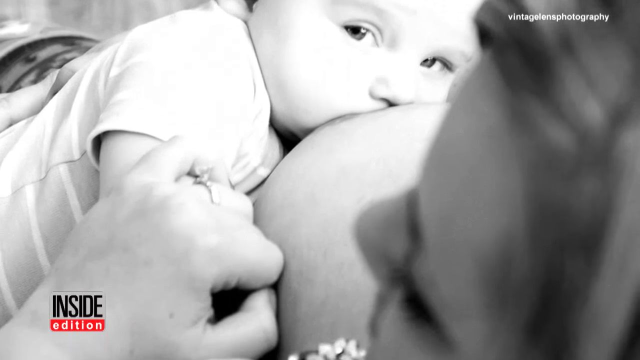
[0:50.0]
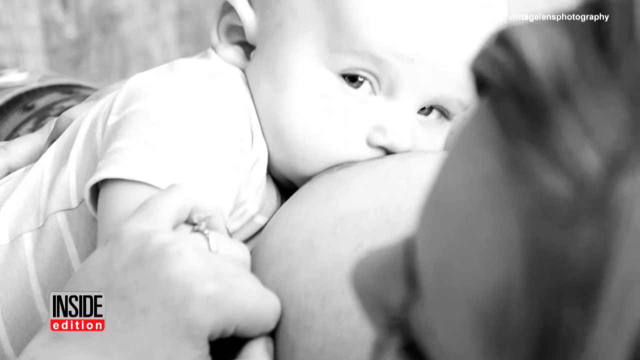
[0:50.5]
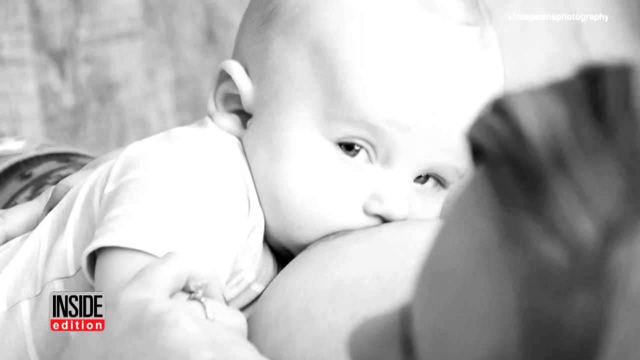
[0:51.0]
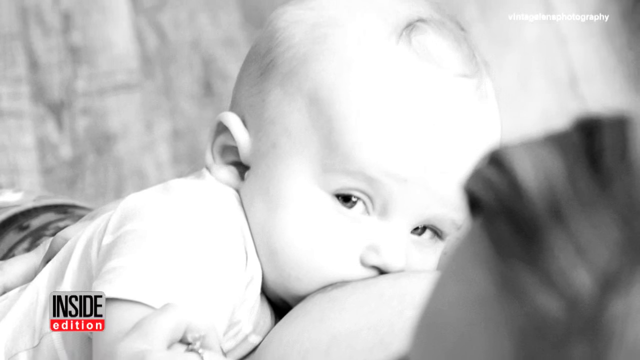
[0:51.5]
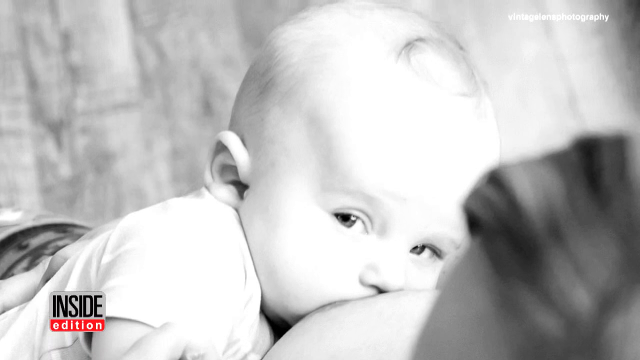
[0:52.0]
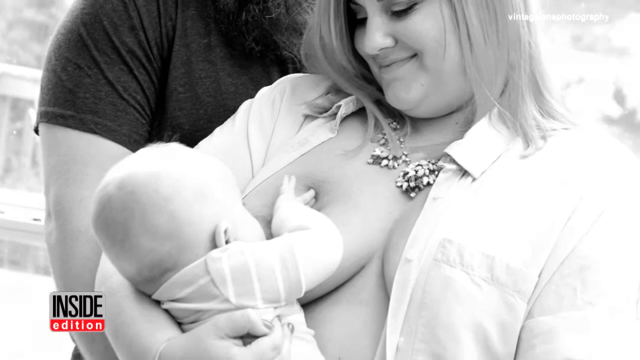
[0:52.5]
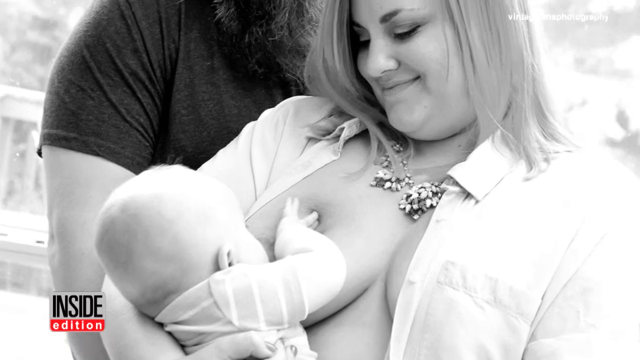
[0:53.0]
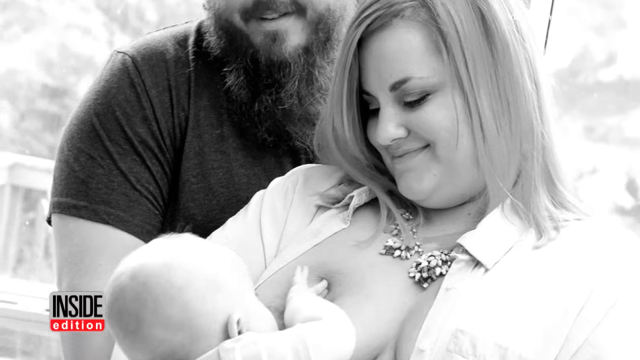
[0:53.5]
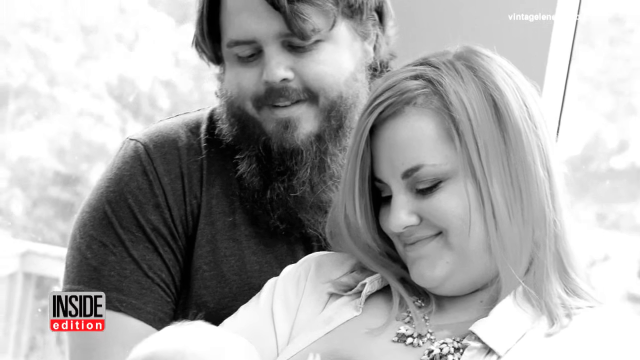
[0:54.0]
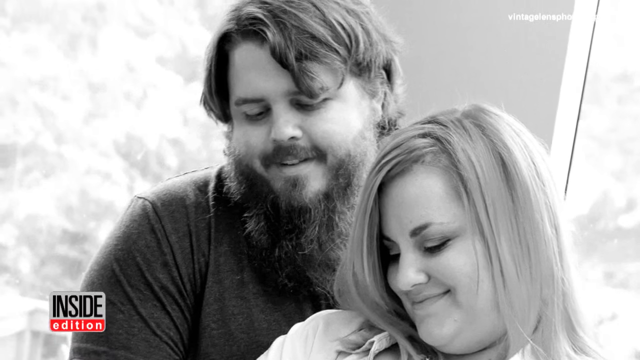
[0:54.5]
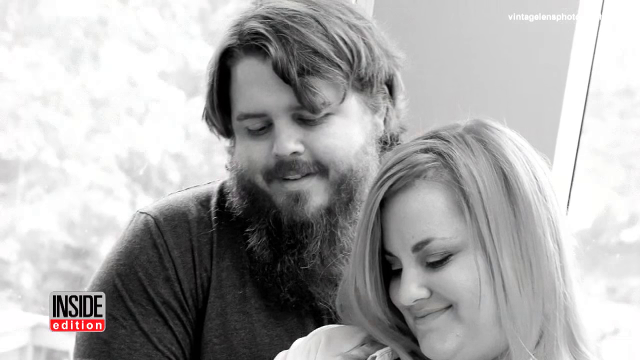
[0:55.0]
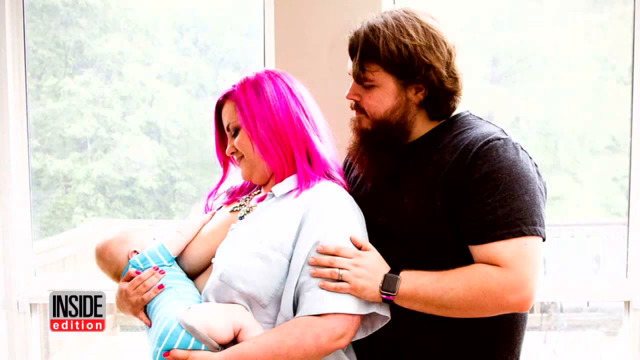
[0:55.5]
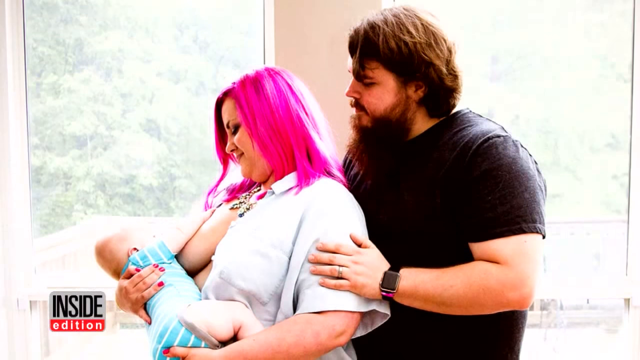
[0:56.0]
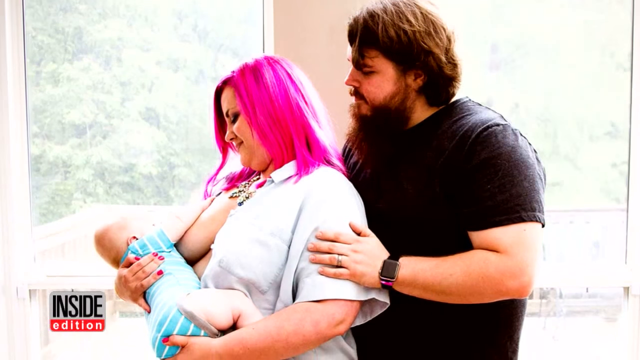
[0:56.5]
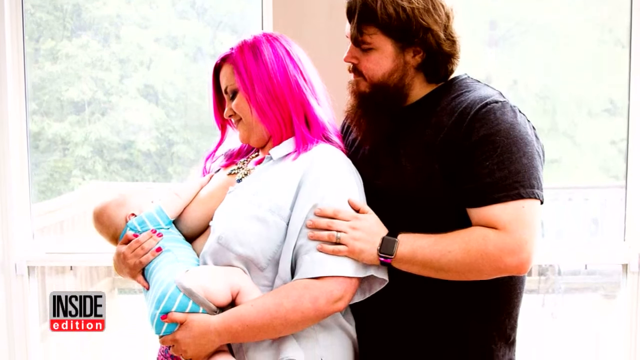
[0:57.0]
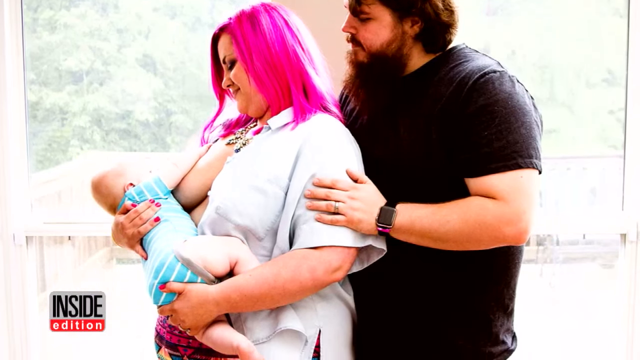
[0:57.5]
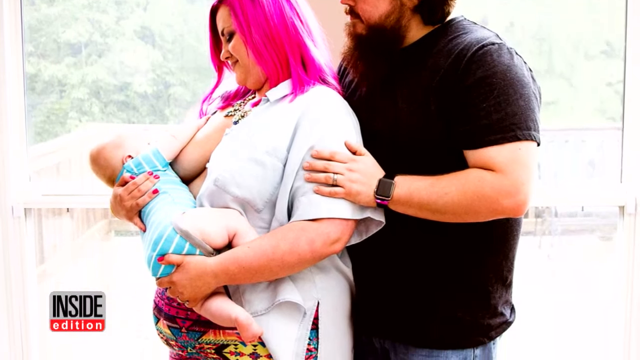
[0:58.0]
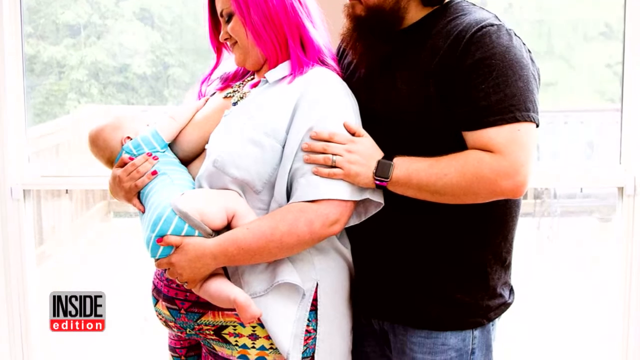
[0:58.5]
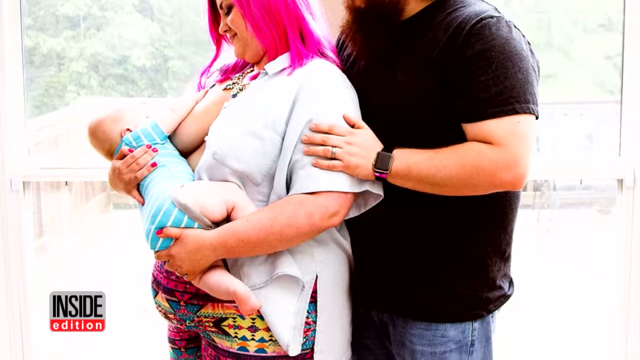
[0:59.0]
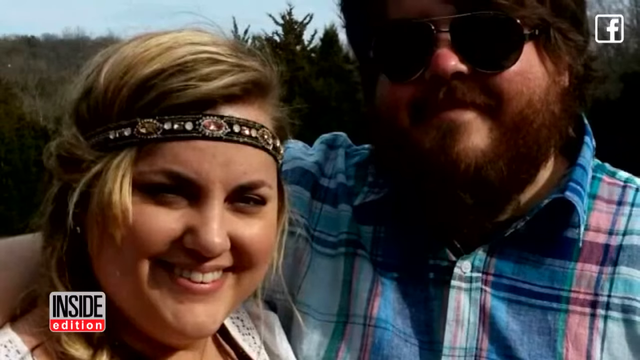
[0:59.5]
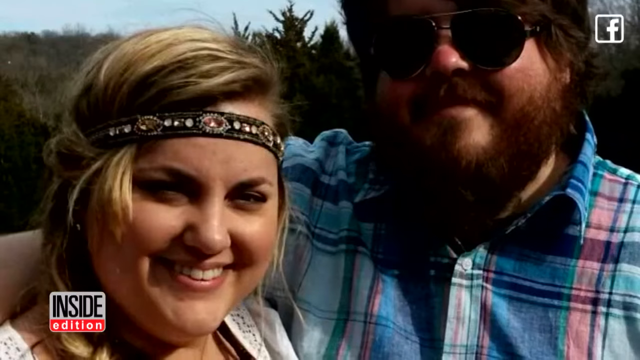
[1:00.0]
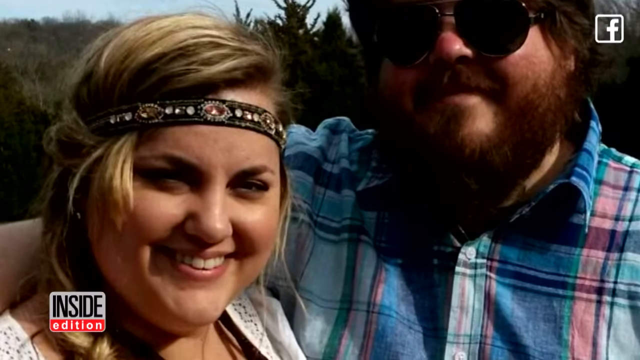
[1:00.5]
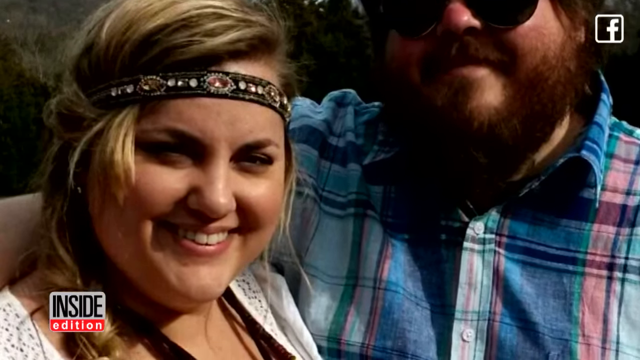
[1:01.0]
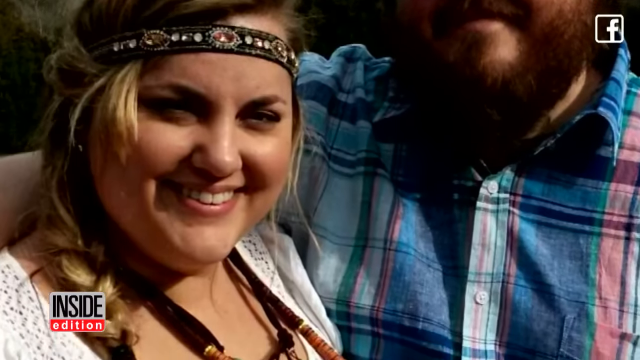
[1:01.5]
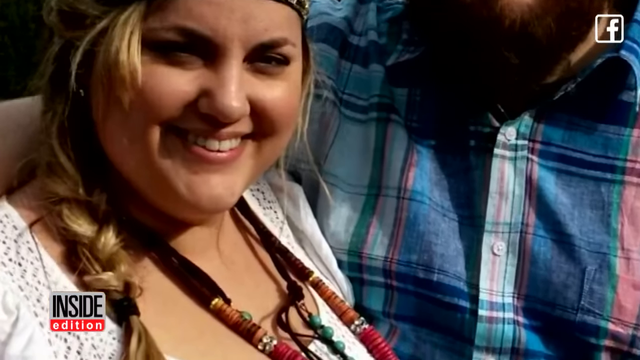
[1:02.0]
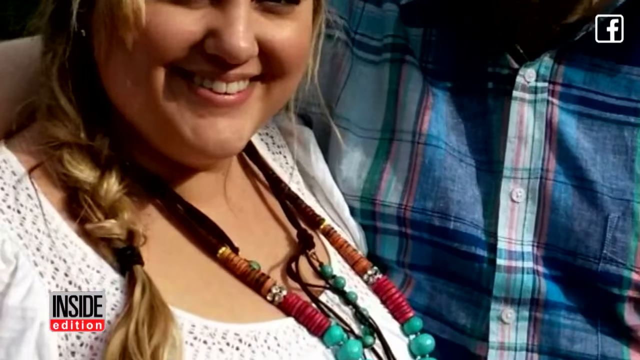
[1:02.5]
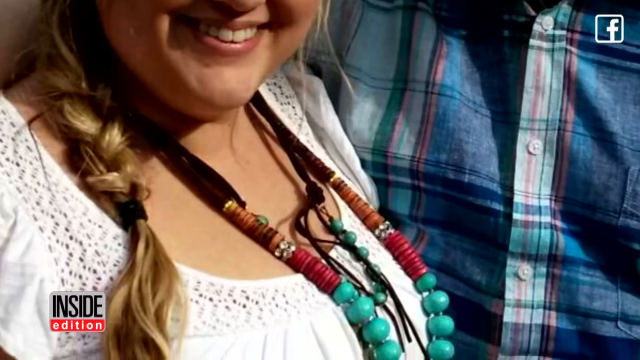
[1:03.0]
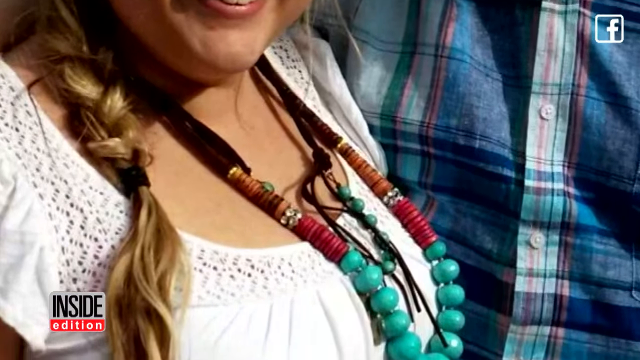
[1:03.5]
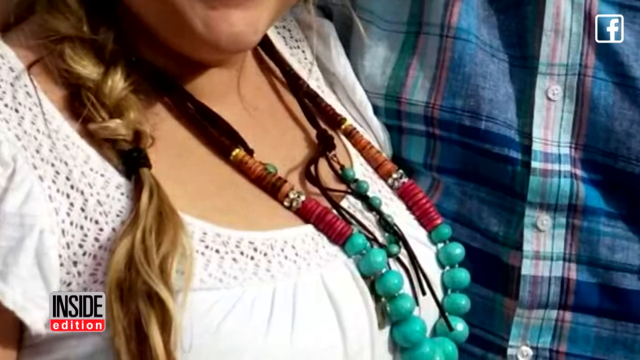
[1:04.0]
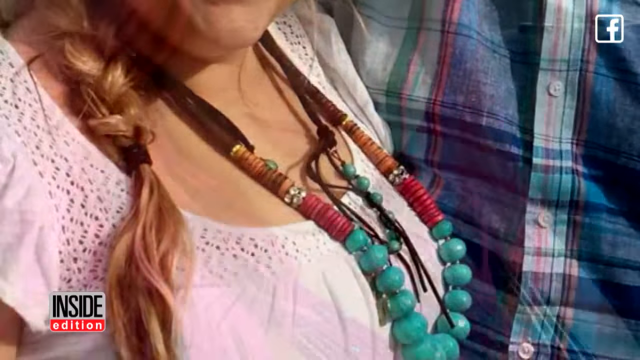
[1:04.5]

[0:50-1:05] Professional photographs show the mom breastfeeding her baby. In one, she stands with a gentleman who is behind her; she has bright pink hair and is breastfeeding the baby. Another shows just her and the baby. A black and white photo shows her with the gentleman, and another shows her and the gentleman standing, just the two of them. She has beads around her head and around her neck, almost like tribal beads. The picture with the beads is taken outside, with trees, some bushes and the sky behind her. She smiles in each picture and looks down at the baby. The video is from Inside Edition.